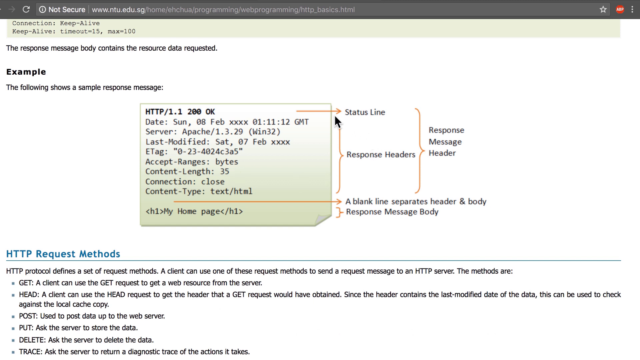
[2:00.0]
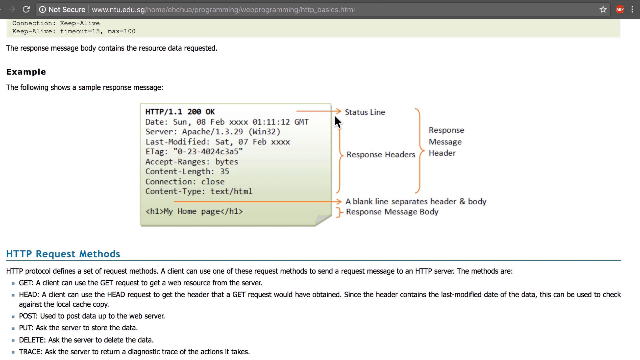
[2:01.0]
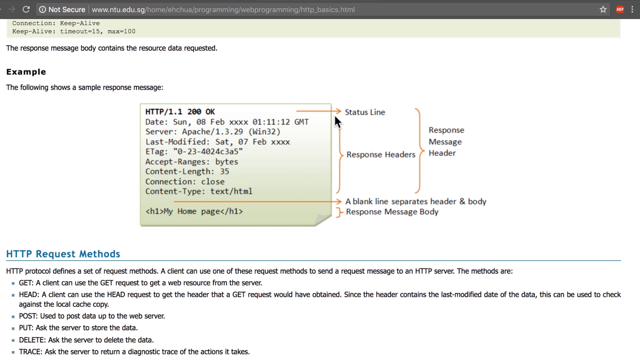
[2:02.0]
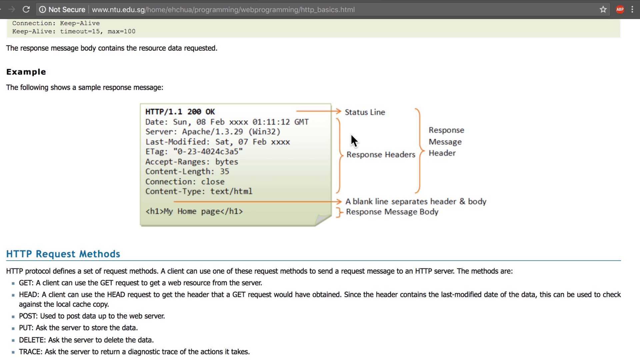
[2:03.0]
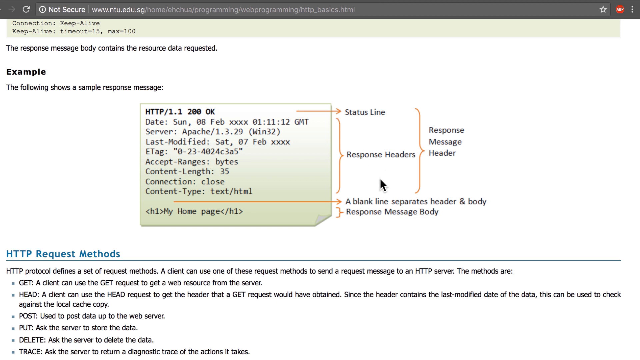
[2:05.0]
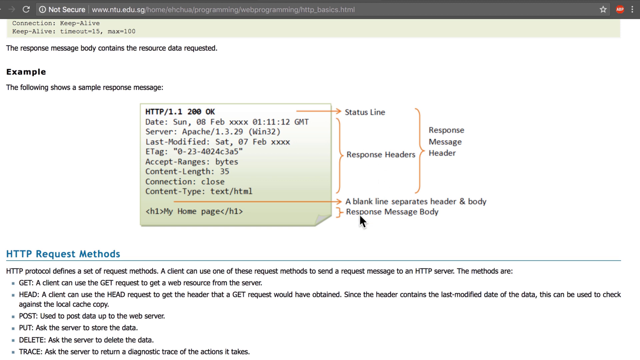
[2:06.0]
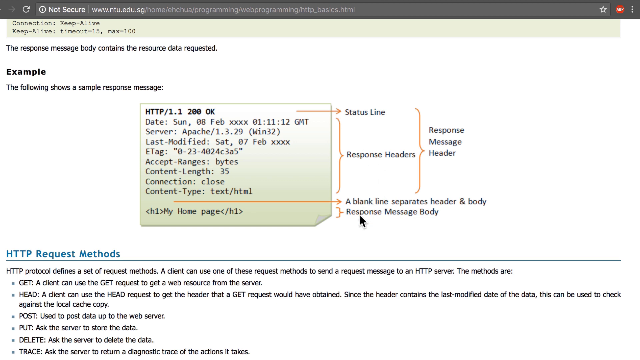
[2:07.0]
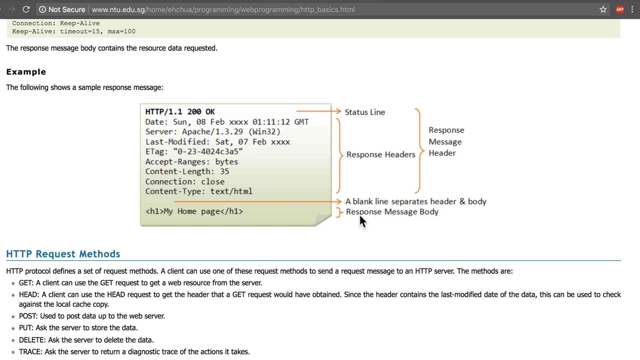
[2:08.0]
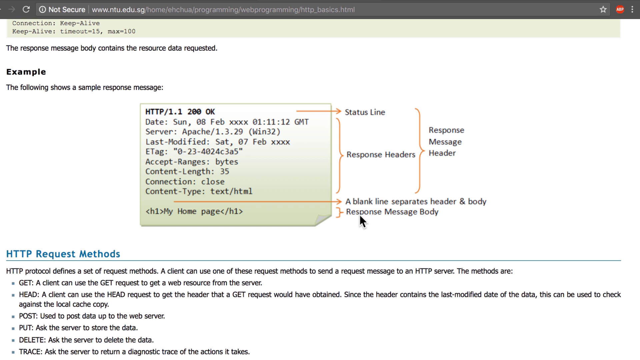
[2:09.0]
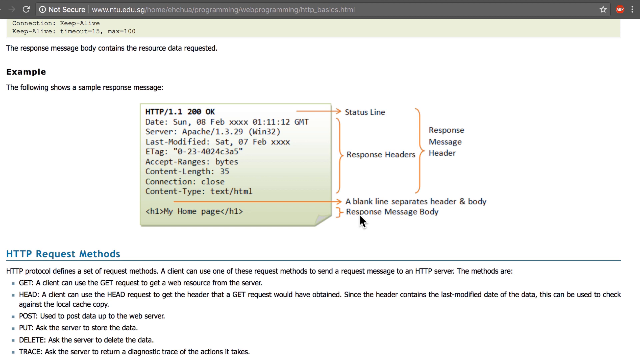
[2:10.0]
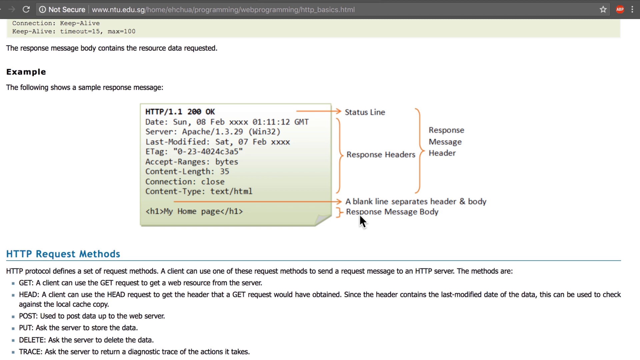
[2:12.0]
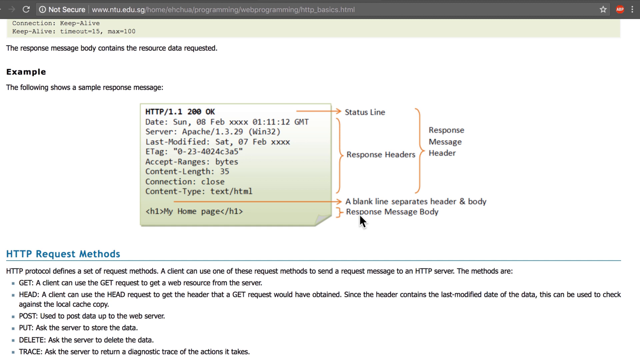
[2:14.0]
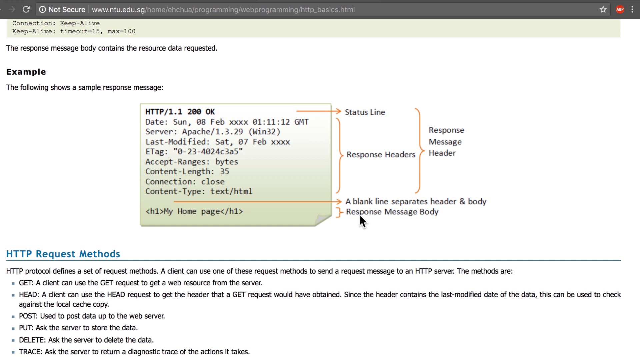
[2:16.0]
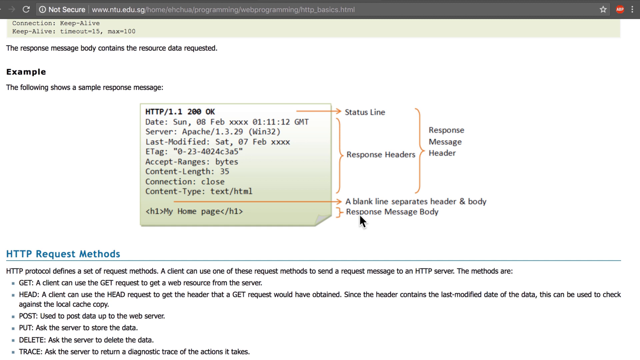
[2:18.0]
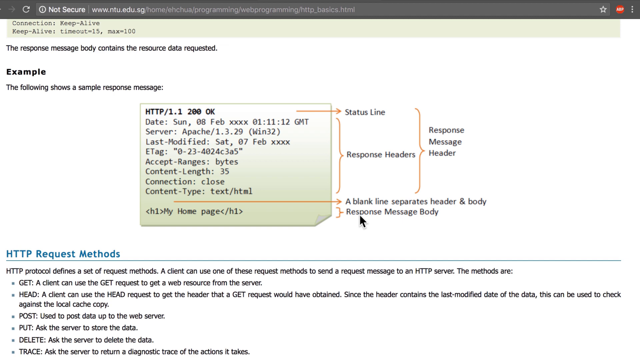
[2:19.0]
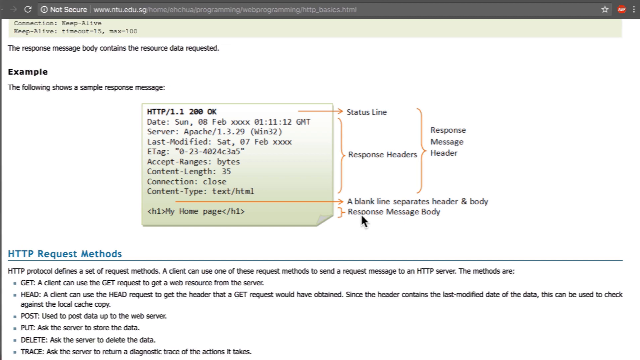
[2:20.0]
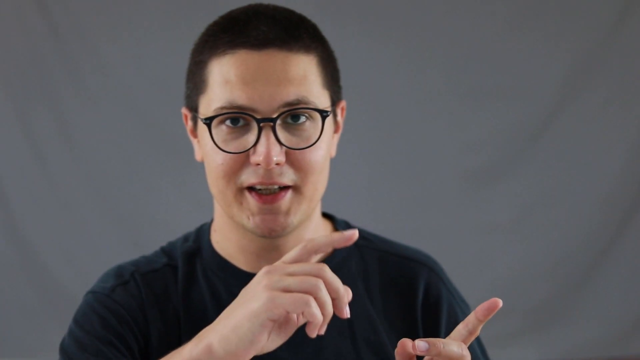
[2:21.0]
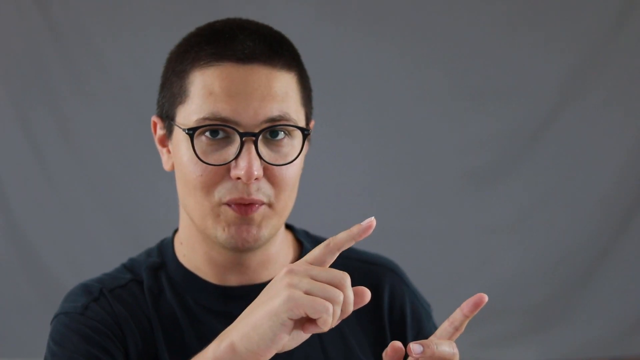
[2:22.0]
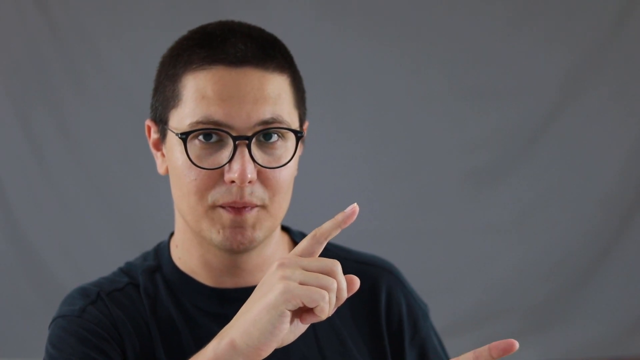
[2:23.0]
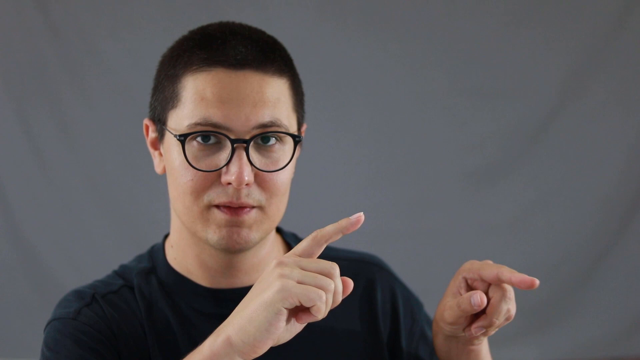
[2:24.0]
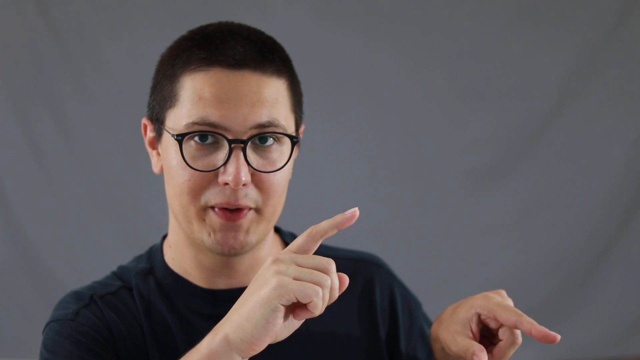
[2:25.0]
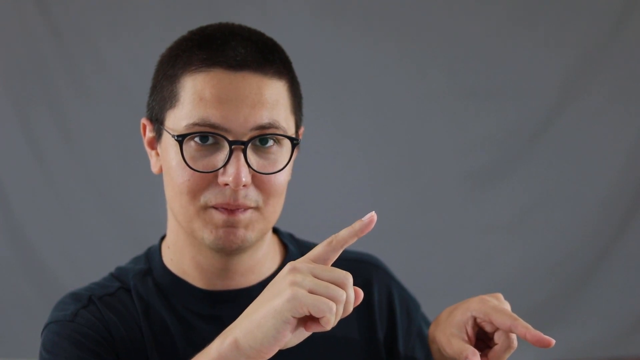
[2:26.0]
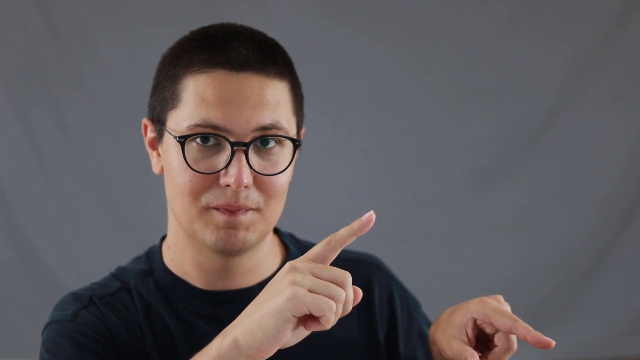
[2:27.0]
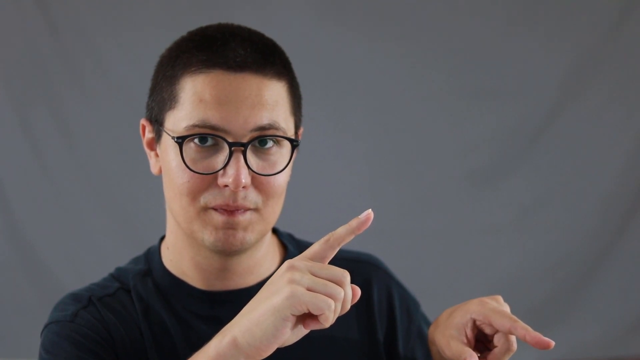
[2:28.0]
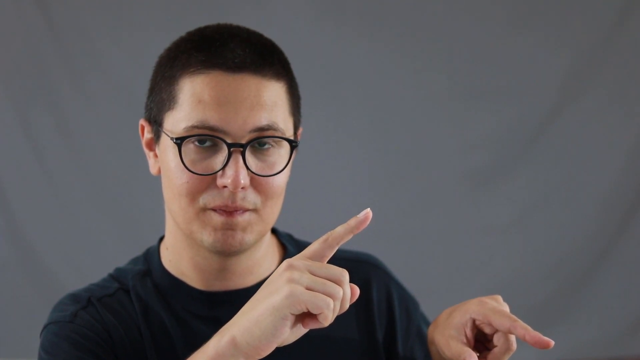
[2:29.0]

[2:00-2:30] A mostly white background appears, with a message across the top reading "the response message body contains the resource data requested." Below it is "example" in bold, then a sentence reading "the following sample shows response message," and a message reading "HTTP-1.1200 OK." It shows an Apache server, a date, a last modified entry, an e-tag, an accepted range in bytes, and a content length. A diagram to the side shows status lines and response headers and how they come in and go out in relation to the message. Underneath is "HTTP request message methods," with text stating that the HTTP protocol defines a set of request methods, listed as GET, HEAD, POST, and PUT. The narrator moves his mouse around one sentence at a time. The video then switches to a live shot of the narrator, a young man with short brown hair and dark-rimmed glasses wearing a t-shirt, pointing with his right hand off to the left.